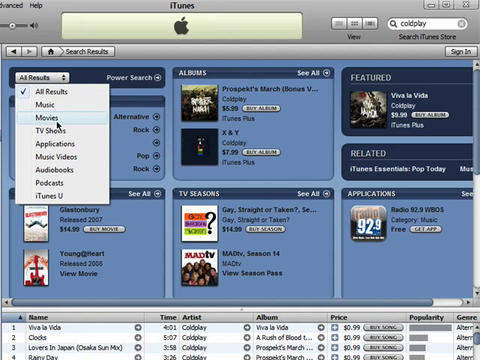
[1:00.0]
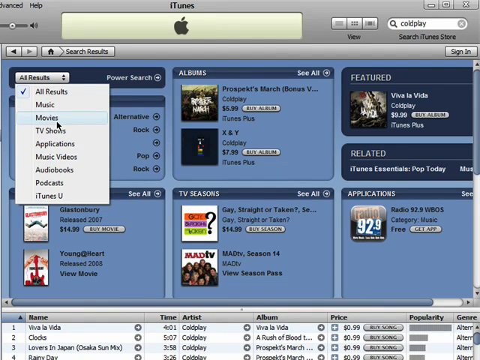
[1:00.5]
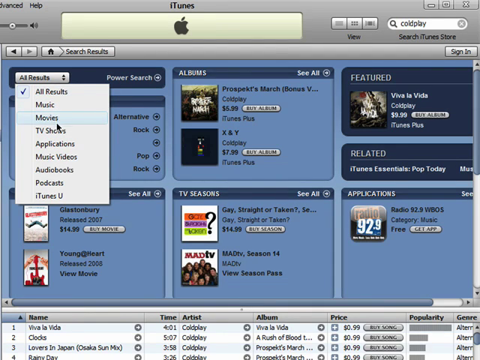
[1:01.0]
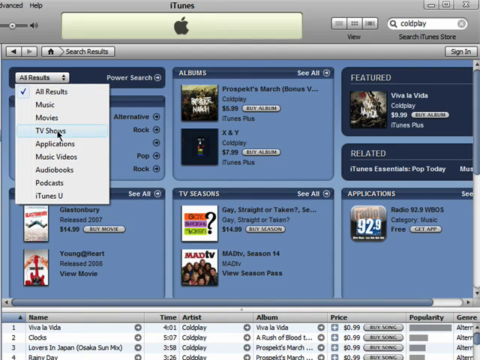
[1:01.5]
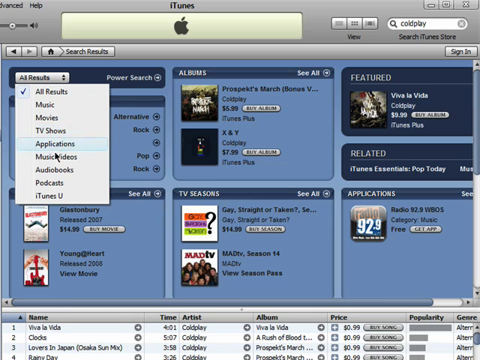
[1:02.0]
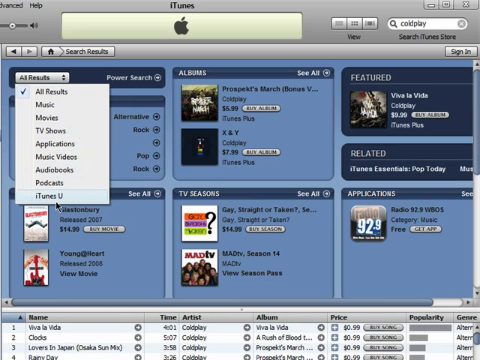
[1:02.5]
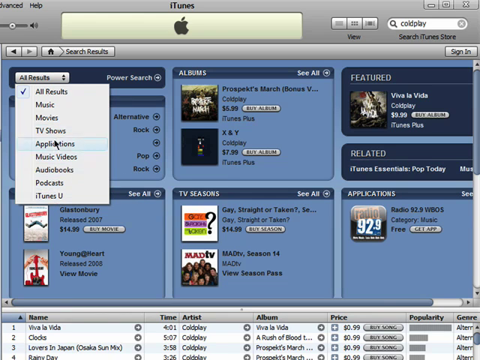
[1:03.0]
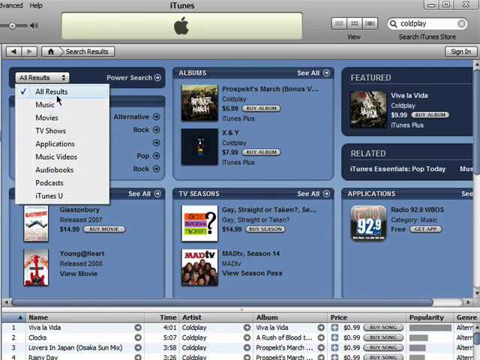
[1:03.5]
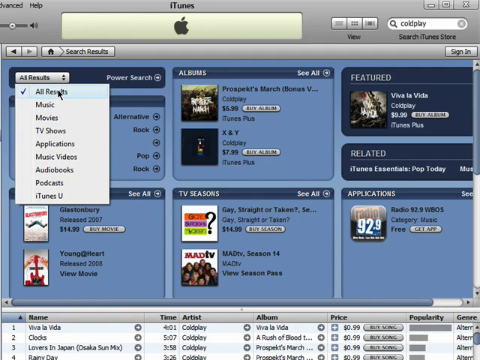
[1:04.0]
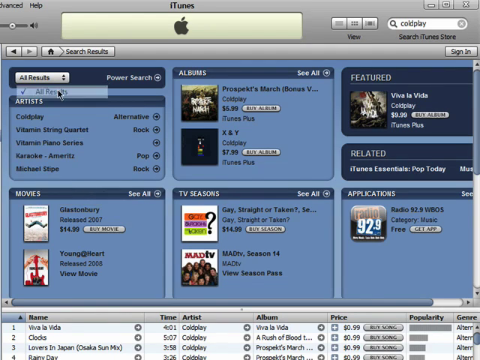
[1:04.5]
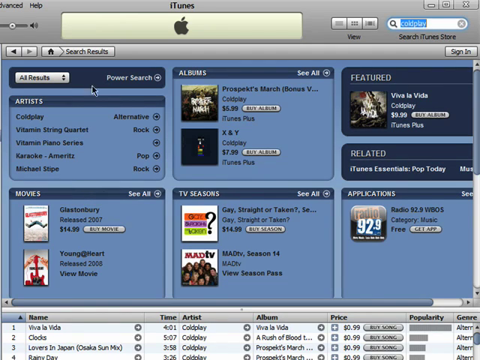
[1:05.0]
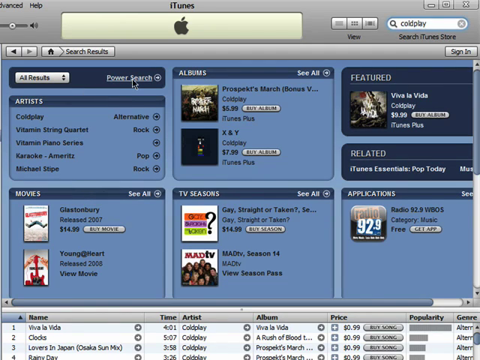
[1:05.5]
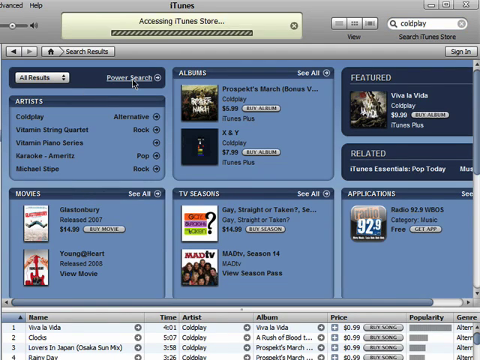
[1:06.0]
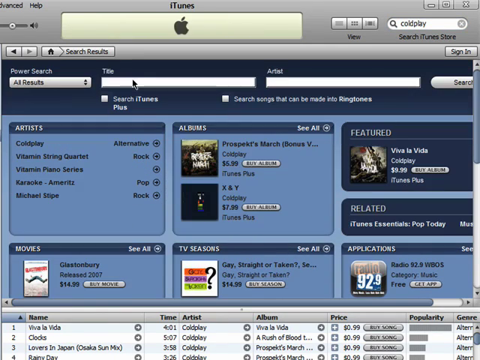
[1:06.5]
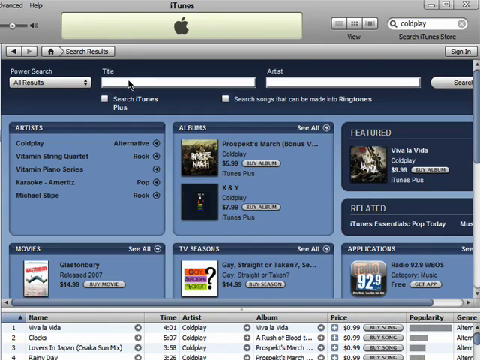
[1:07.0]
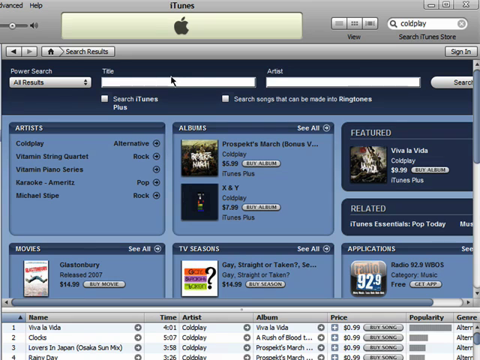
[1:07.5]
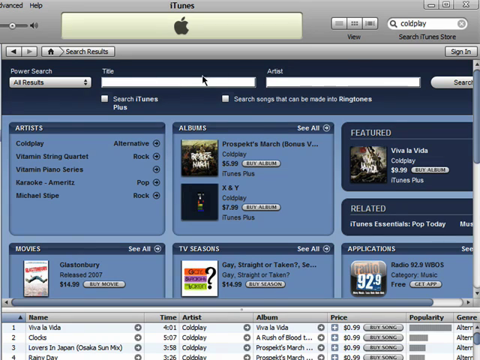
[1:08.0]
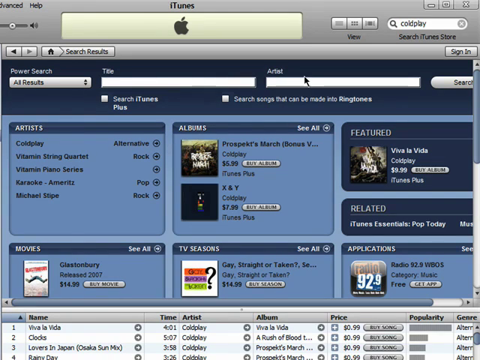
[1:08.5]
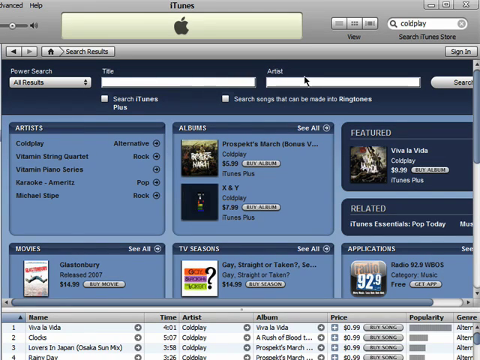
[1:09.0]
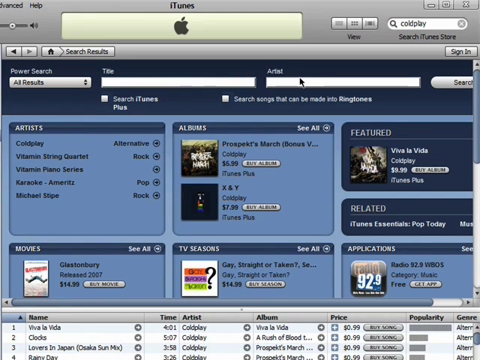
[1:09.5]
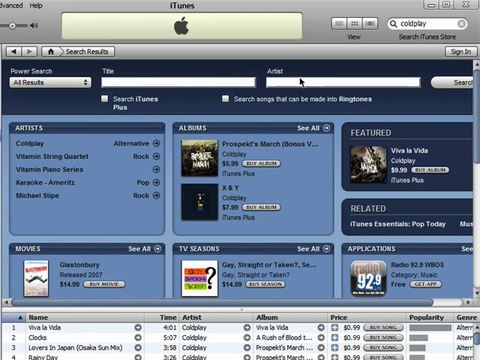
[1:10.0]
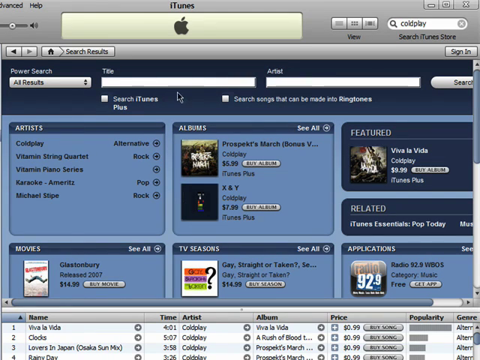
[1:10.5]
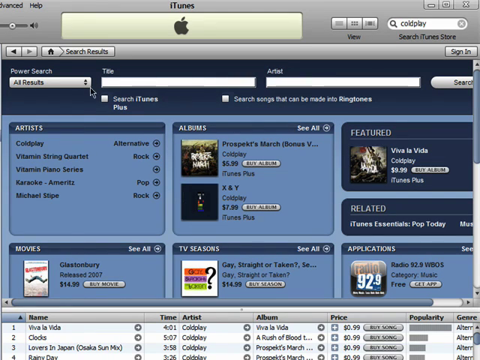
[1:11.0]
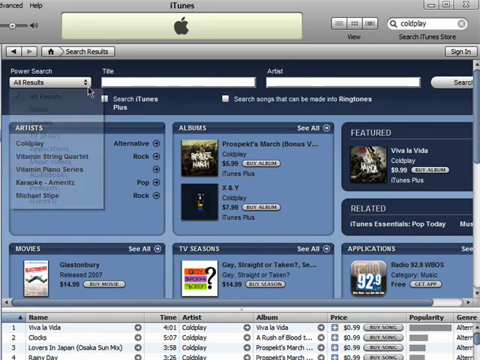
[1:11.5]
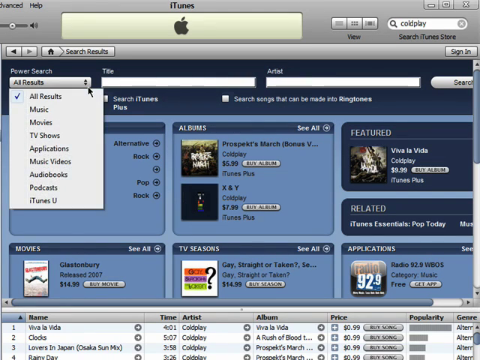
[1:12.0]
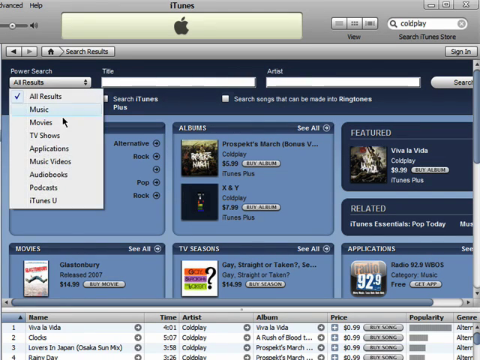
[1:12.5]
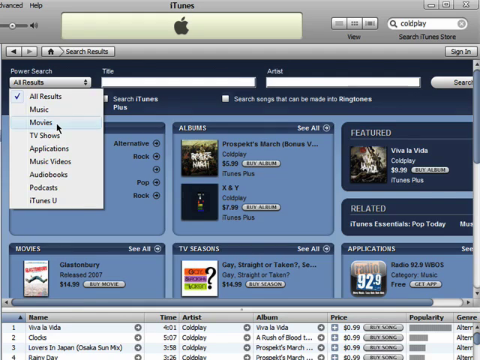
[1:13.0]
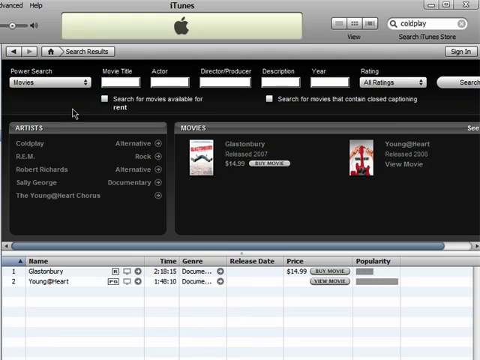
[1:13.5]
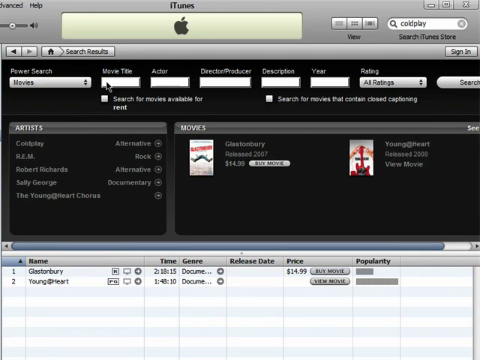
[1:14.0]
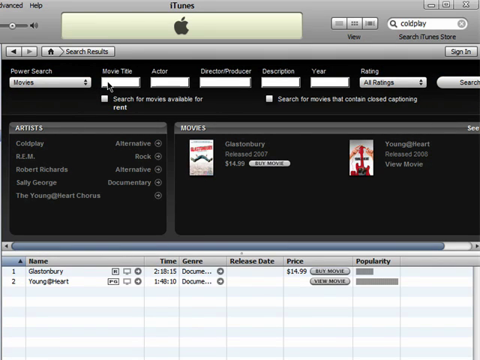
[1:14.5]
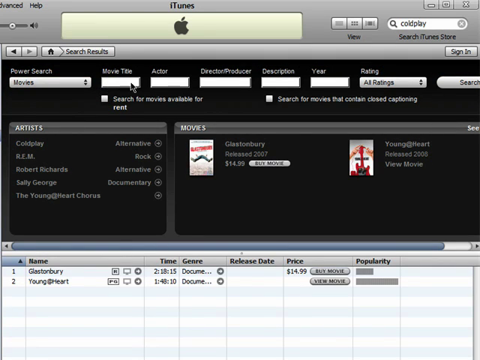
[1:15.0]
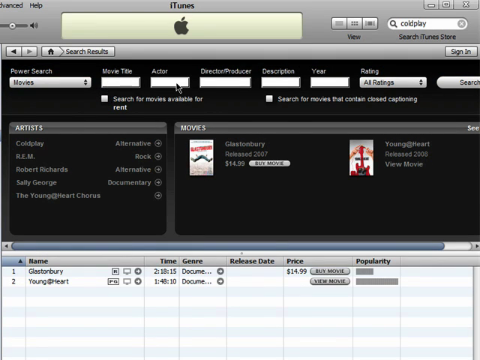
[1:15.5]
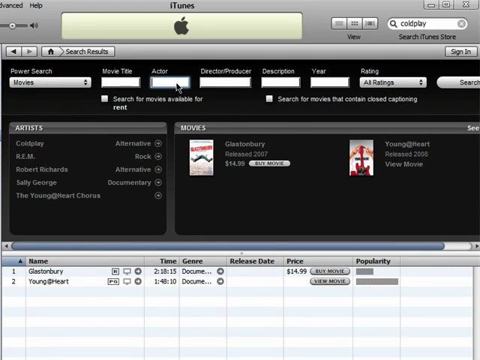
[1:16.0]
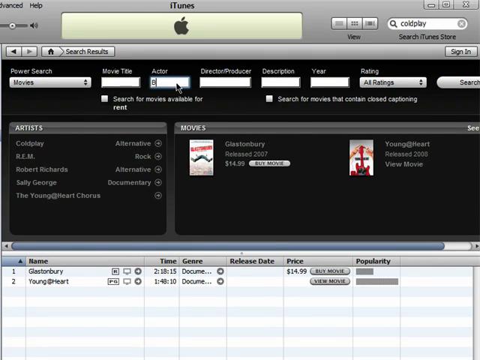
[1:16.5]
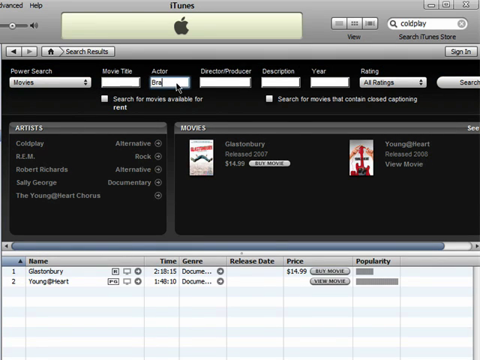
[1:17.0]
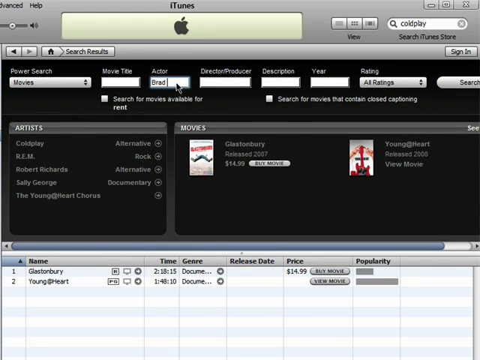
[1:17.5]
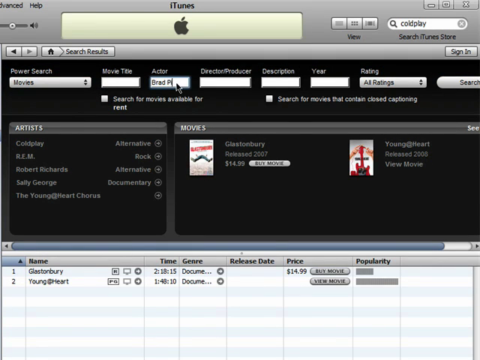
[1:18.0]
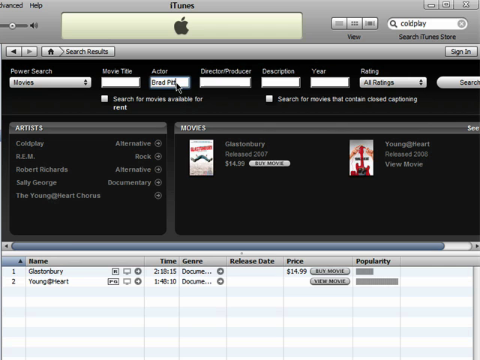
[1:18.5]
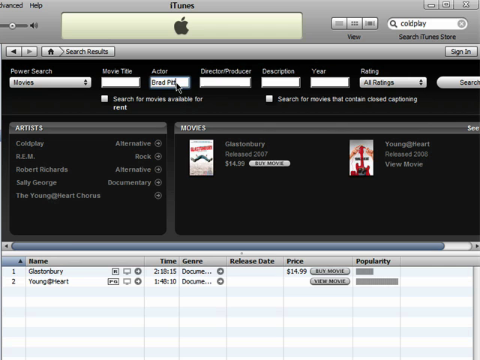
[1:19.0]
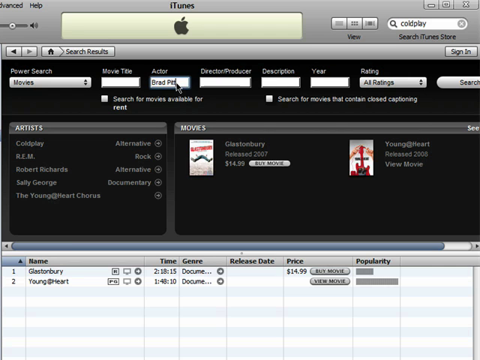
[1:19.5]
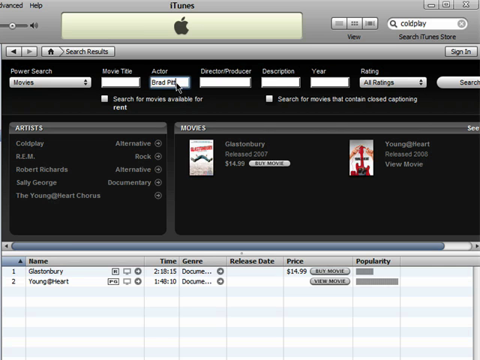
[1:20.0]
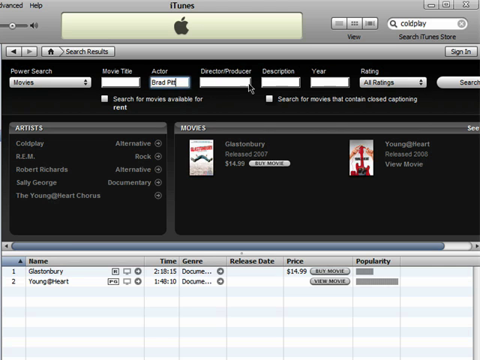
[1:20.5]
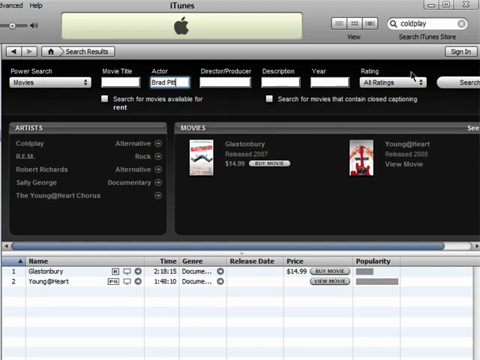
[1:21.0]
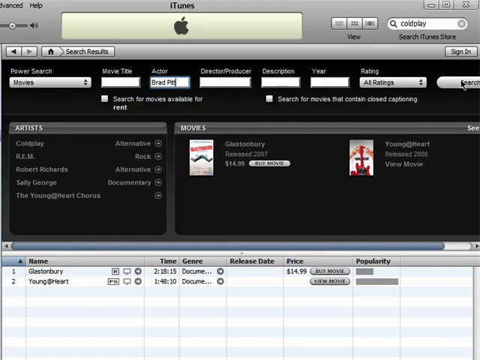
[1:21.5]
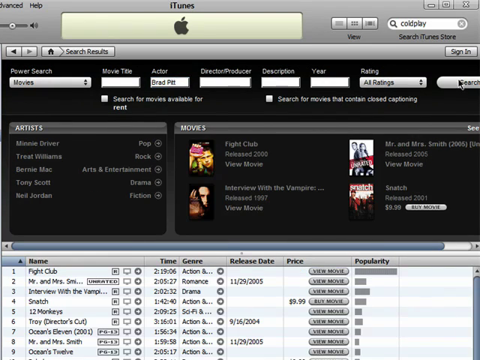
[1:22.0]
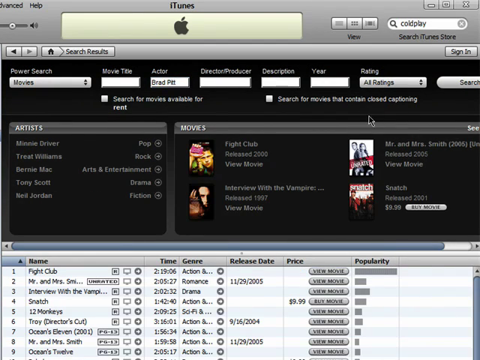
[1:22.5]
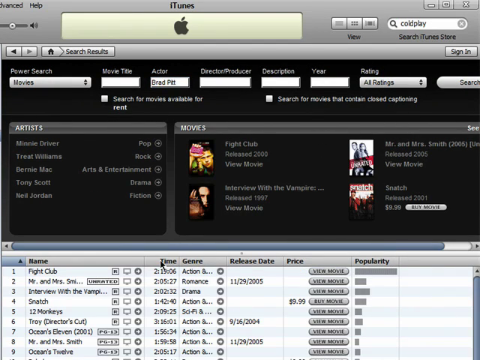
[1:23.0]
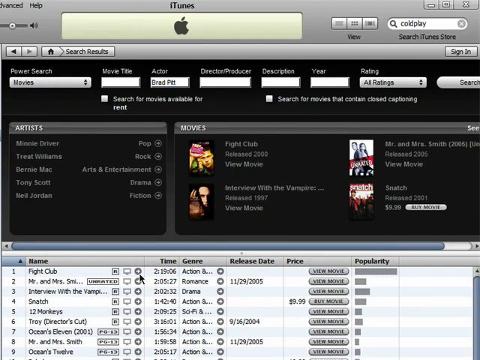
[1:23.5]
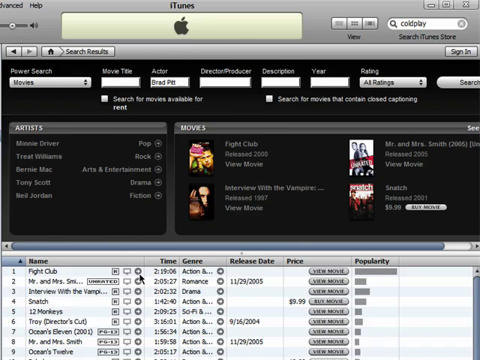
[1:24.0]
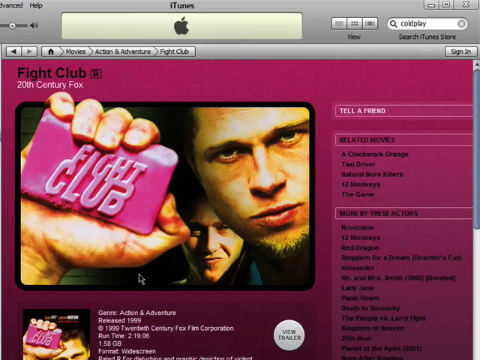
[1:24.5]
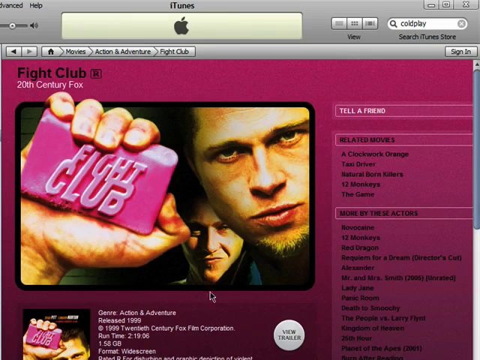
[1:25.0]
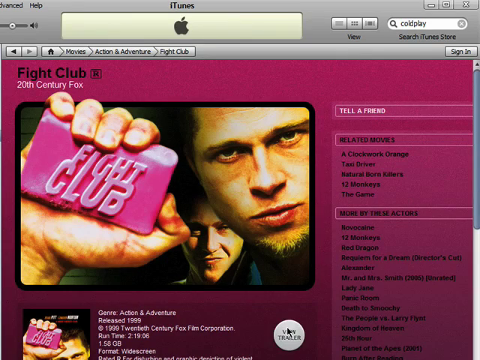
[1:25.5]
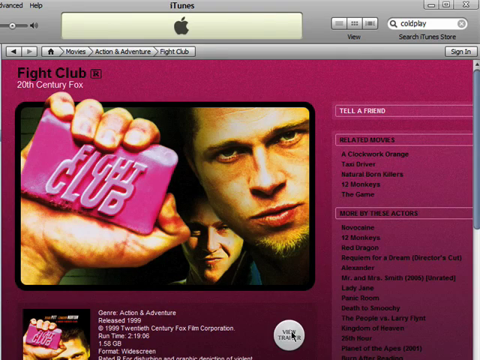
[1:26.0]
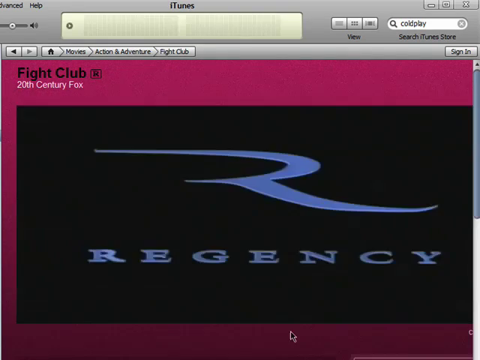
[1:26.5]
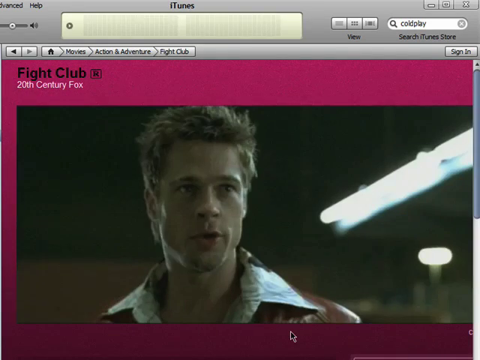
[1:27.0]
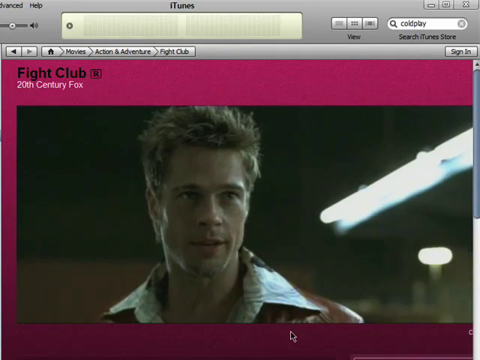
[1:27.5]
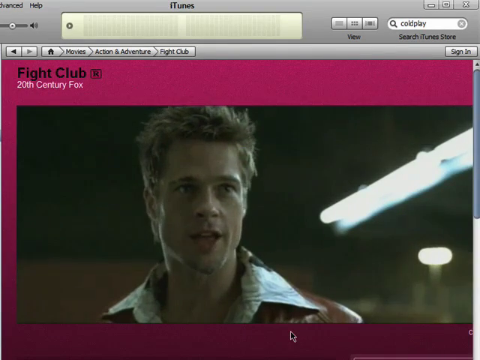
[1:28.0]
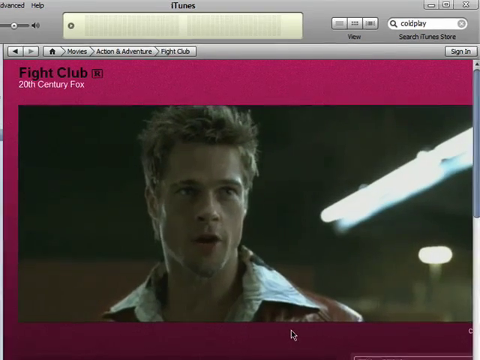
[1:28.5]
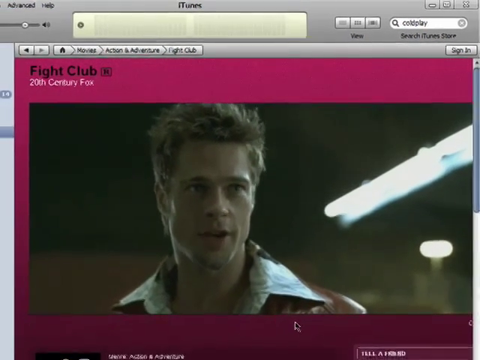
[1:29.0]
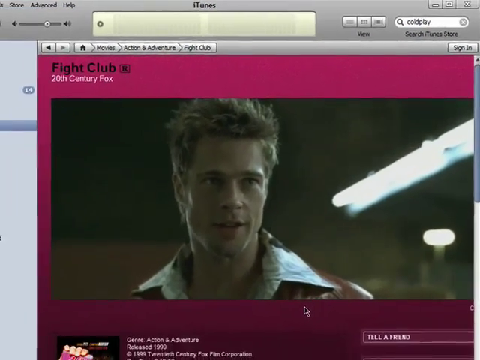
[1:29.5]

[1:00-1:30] The Power Search section of the iTunes Store is opened, and movies is selected as the category, with fields for movie titles, actors, directors, producers, descriptions or years. Brad Pitt is entered as the actor and search is clicked. The results are Fight Club, released in 2000; Interview with the Vampire, released in 1997; Mr. and Mrs. Smith, released in 2005; and Snatch, released in 2001. The first three are available to view, while Snatch has to be bought for $9.99. Fight Club is clicked, showing it was released by 20th Century Fox in the action and adventure genre, with a runtime of 2 hours, 19 minutes and 6 seconds. The poster shows Brad Pitt's face as he holds a soap that says "Fight Club," with Edward Norton also on the poster. The movie starts playing, giving a good look at Brad Pitt and Edward Norton in the film.